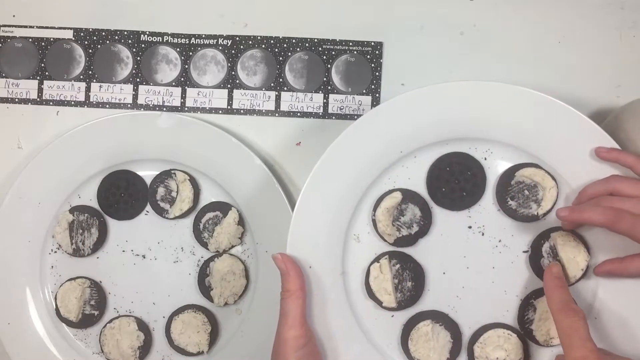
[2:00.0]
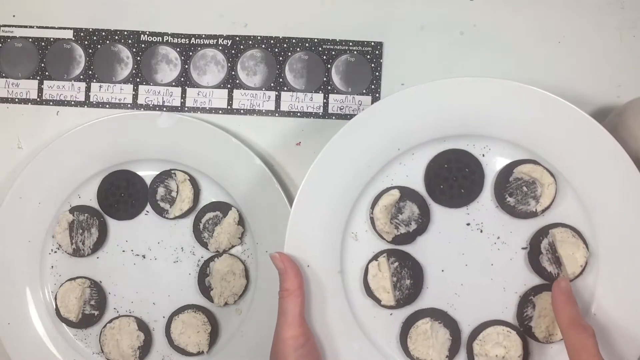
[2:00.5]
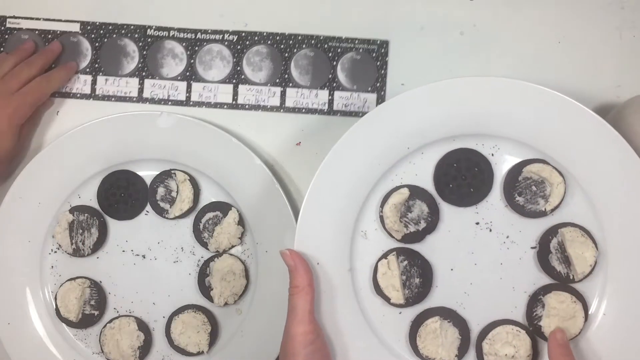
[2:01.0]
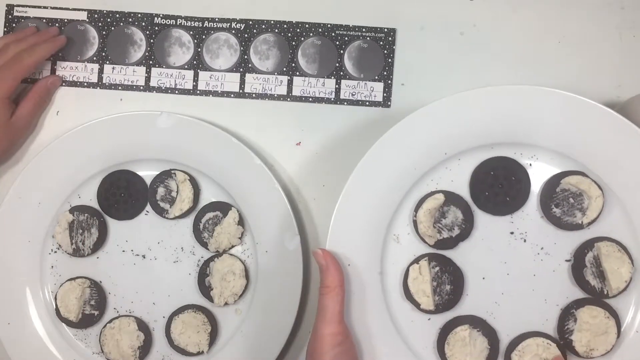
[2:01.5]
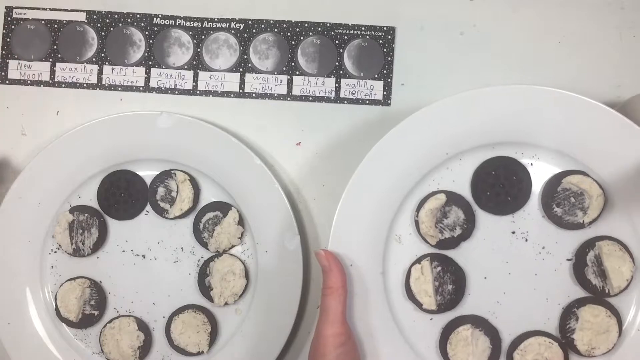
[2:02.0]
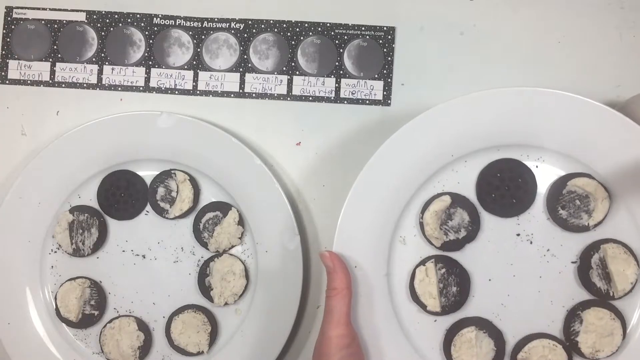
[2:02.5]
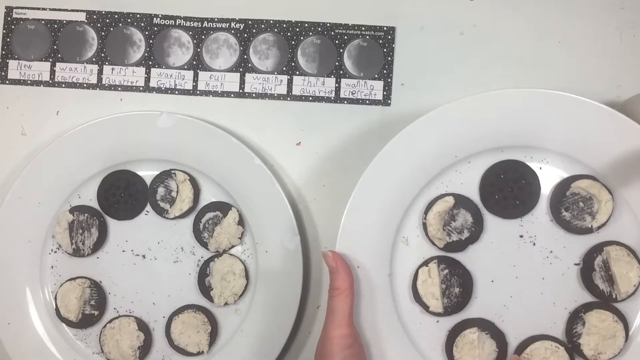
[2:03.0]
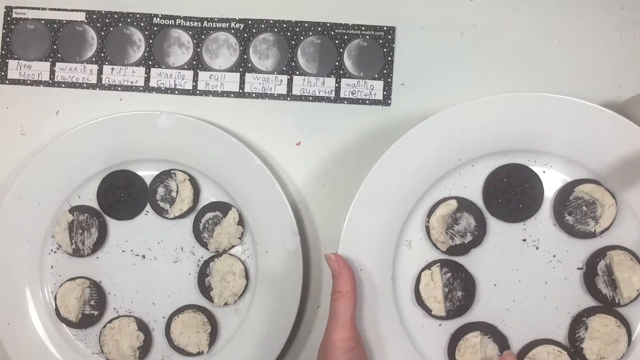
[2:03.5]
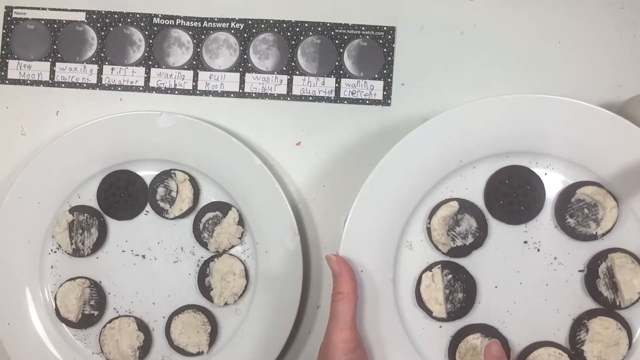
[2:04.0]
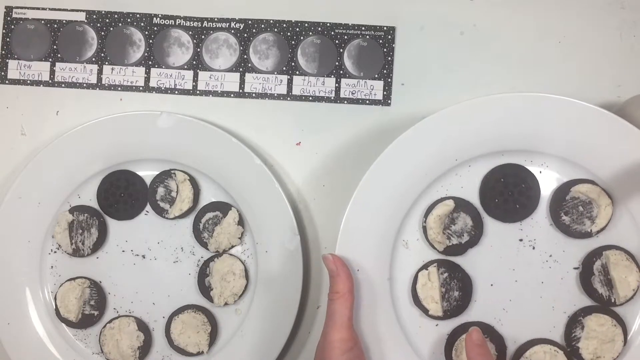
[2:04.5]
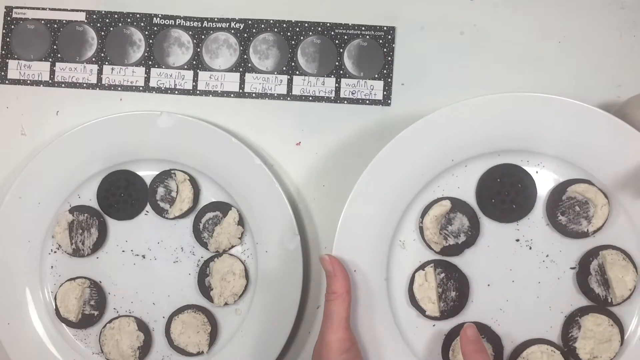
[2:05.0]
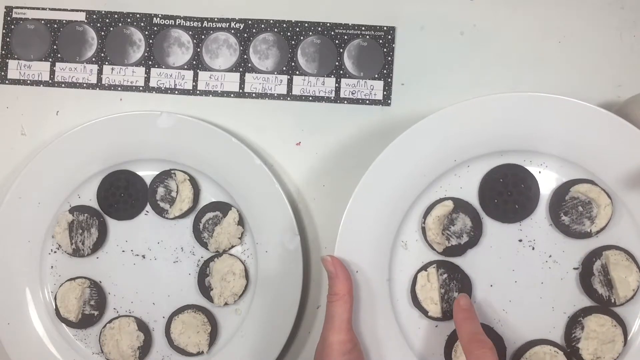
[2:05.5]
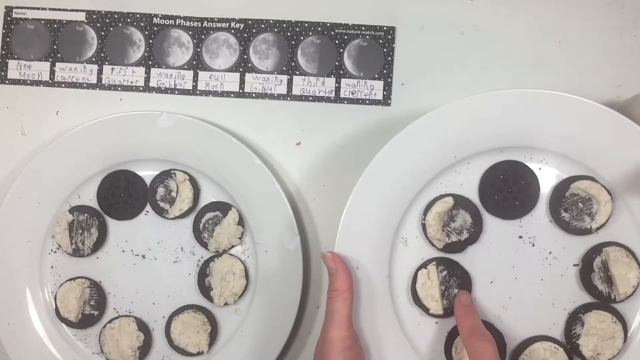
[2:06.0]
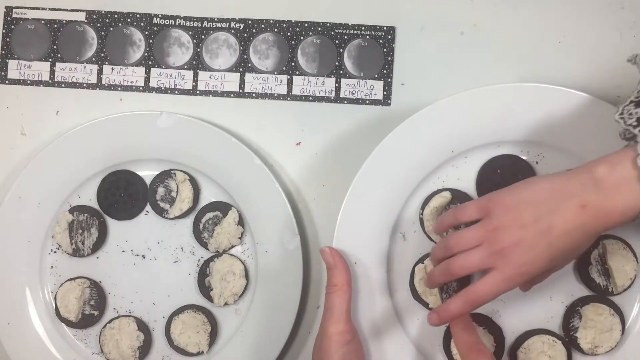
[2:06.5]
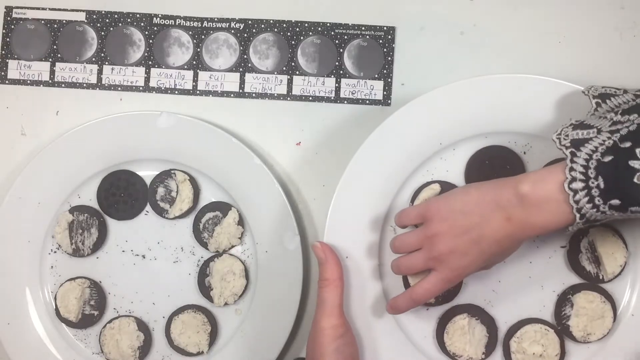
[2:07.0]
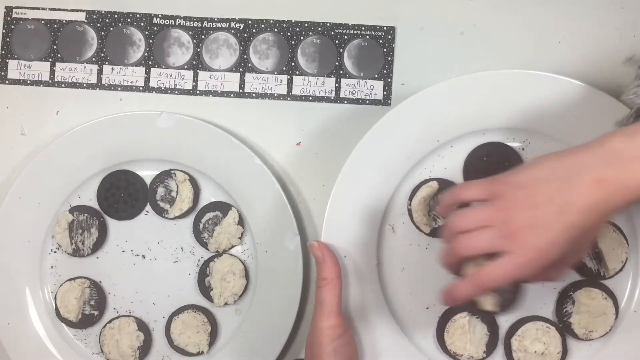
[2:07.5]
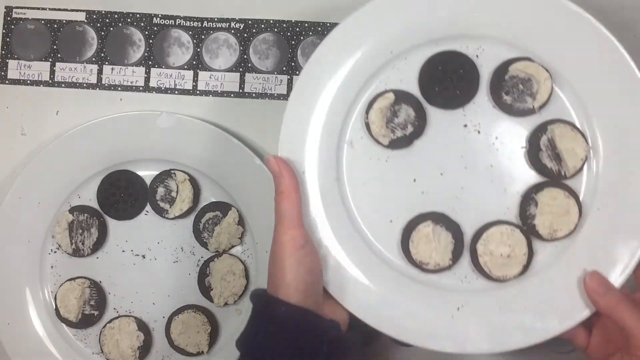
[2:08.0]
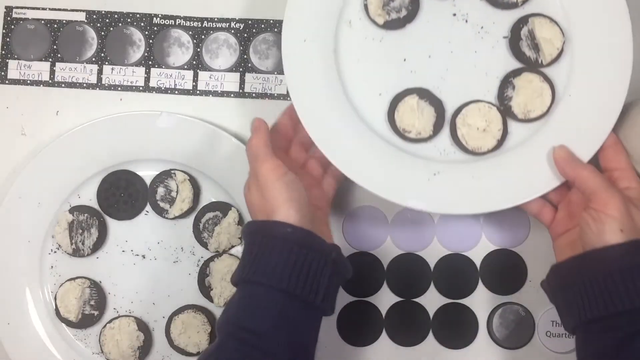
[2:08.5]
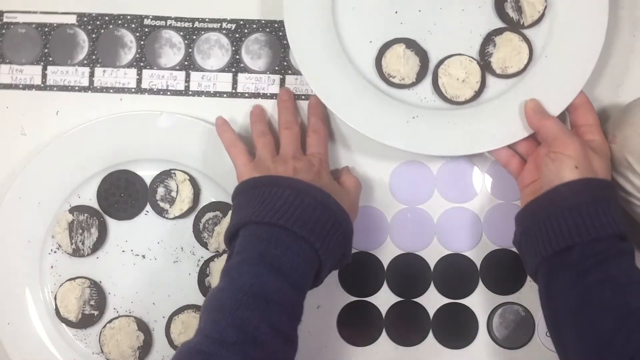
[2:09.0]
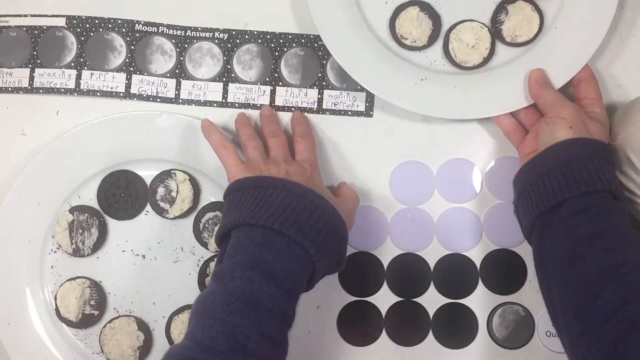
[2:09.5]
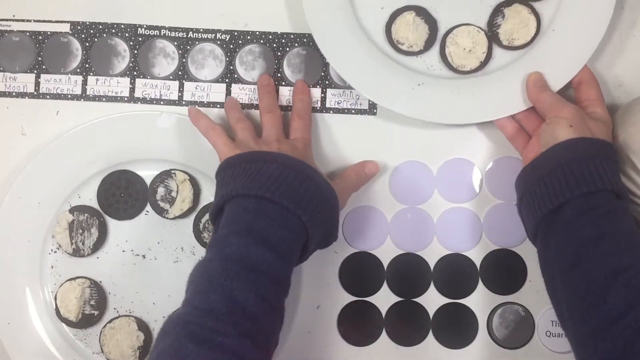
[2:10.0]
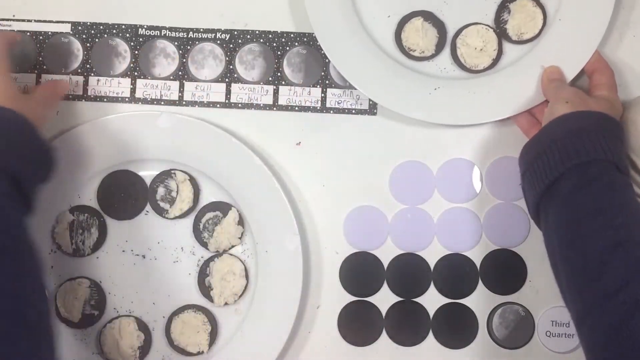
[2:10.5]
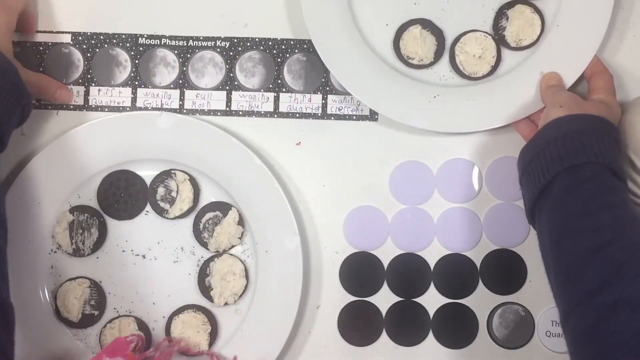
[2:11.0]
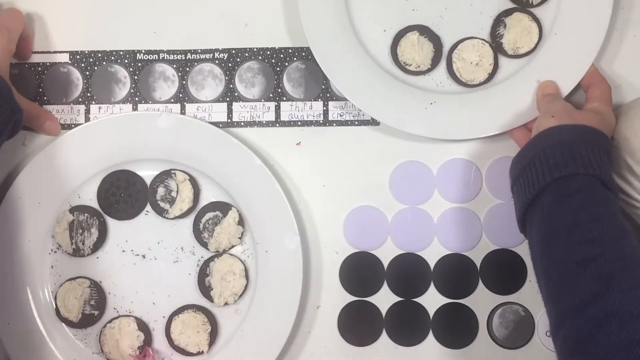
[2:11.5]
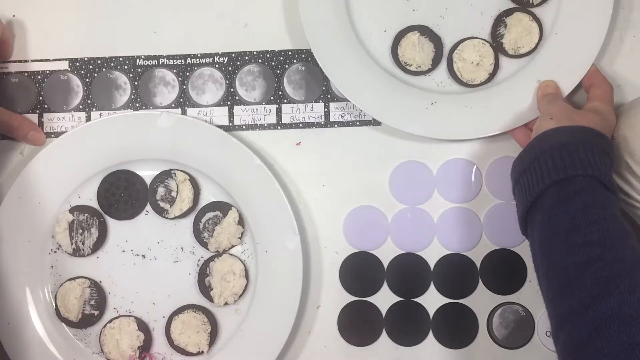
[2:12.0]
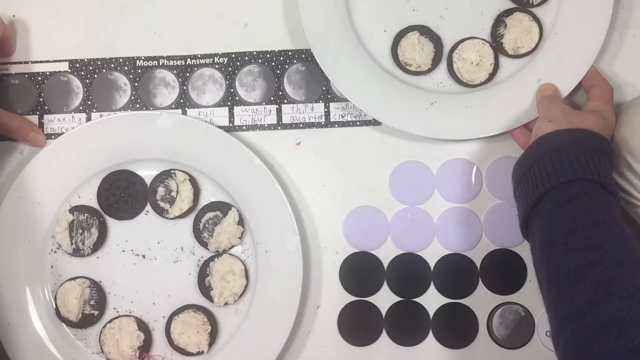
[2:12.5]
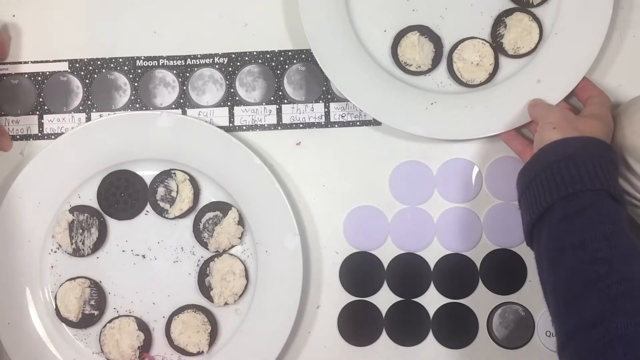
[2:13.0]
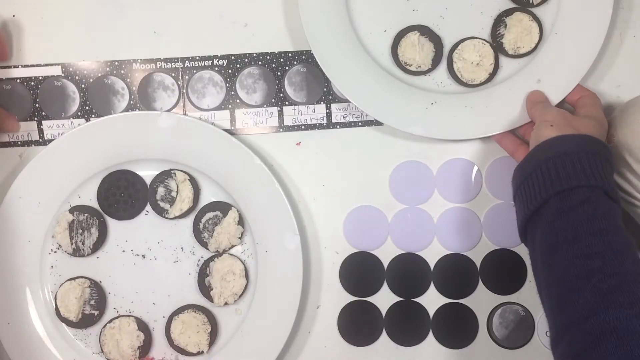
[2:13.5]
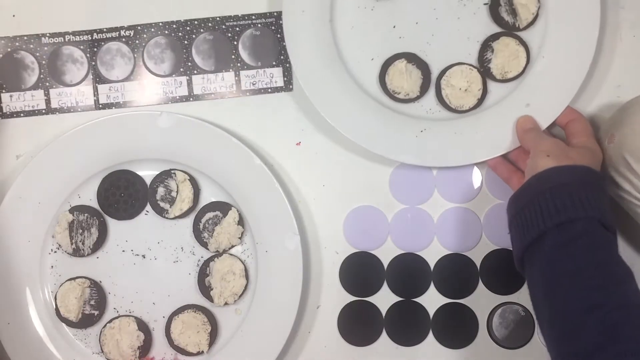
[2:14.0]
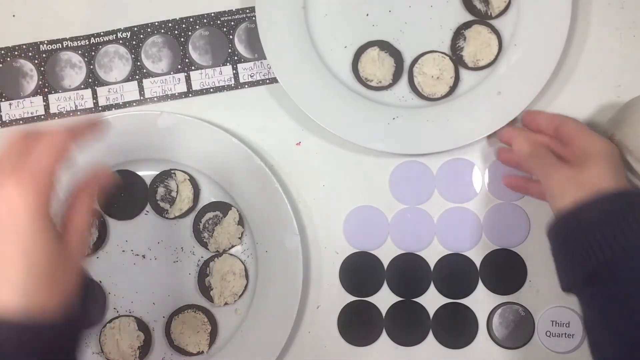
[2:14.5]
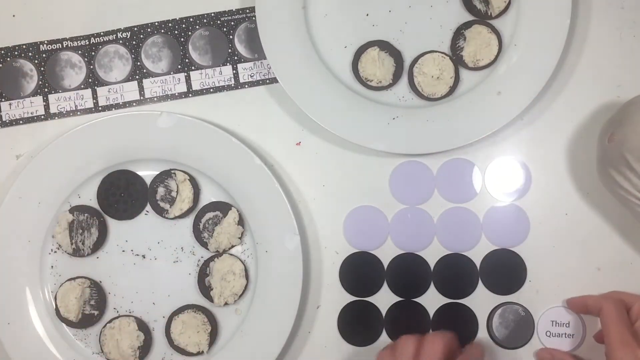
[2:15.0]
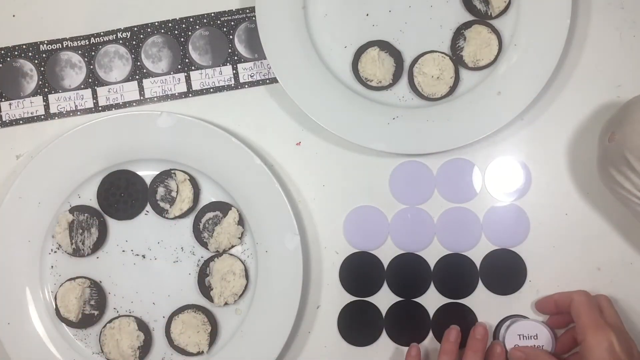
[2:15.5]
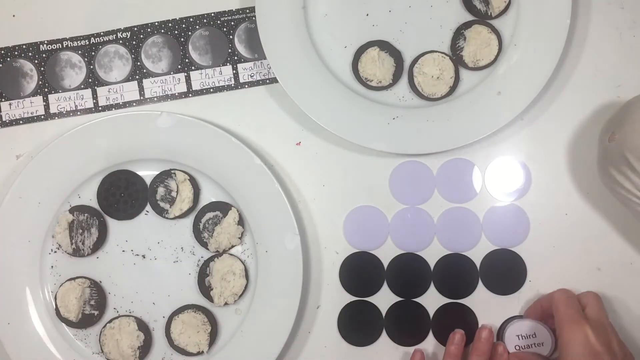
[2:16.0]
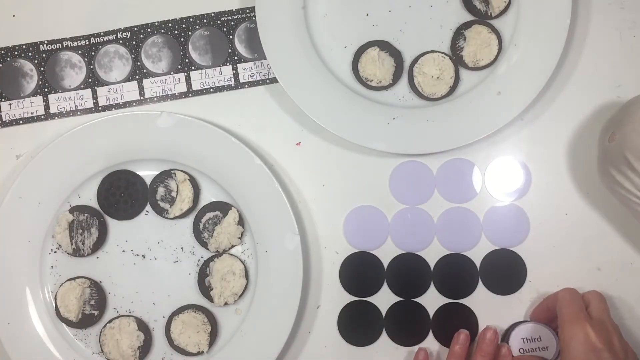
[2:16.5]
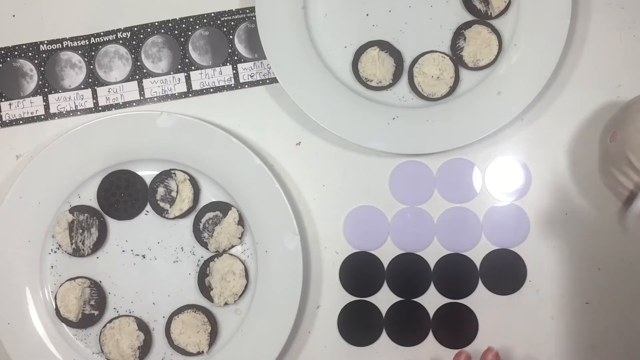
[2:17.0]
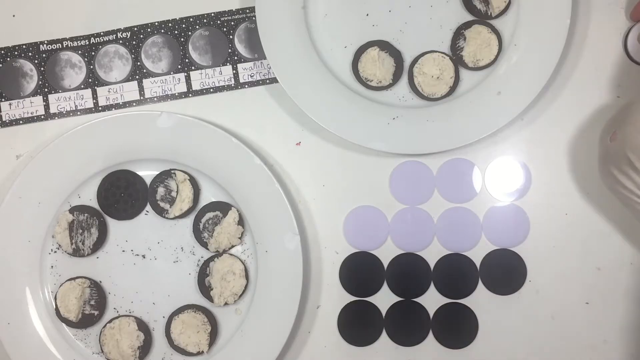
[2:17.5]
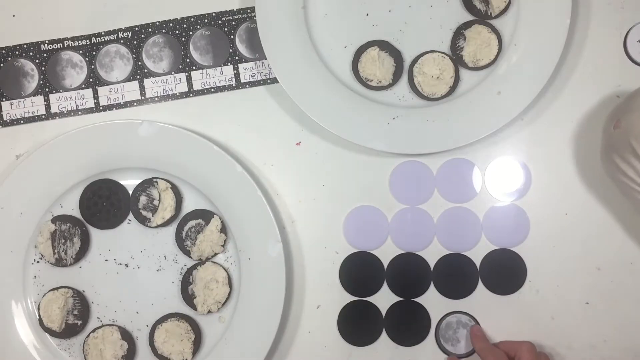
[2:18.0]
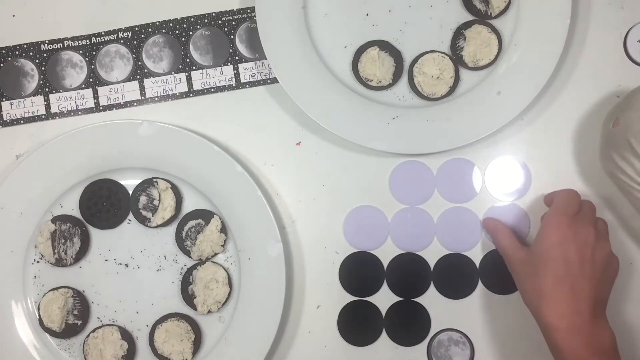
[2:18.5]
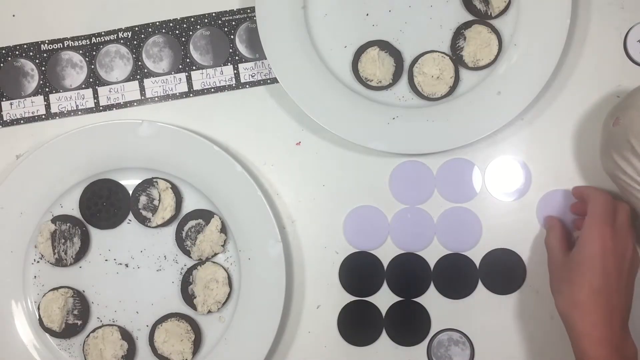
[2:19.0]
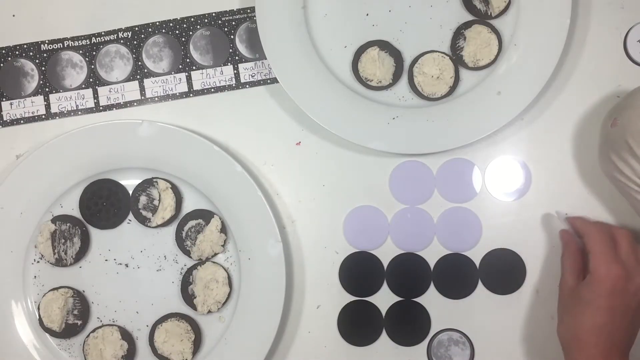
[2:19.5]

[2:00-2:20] The chart of moon phases is at the top left of the screen, and at the bottom are two plates of cookies, each with certain amounts of frosting scraped away to represent the phases of the moon. Someone in a long-sleeved dark shirt takes the plate on the right and moves it to the top of the table. The plastic disks have writing on them; a white disk that has been flipped over says "waxing crescent". The frosting on the cookies appears to have been scraped off to form the shapes of the moon phases.